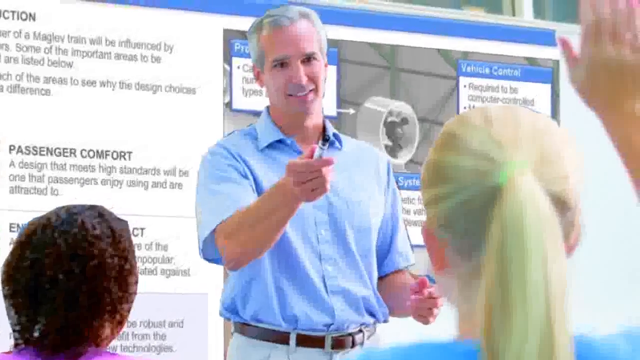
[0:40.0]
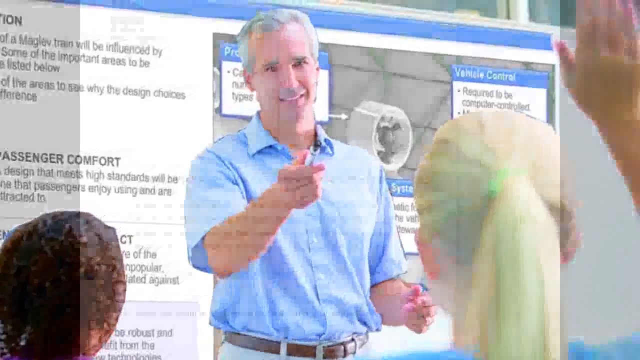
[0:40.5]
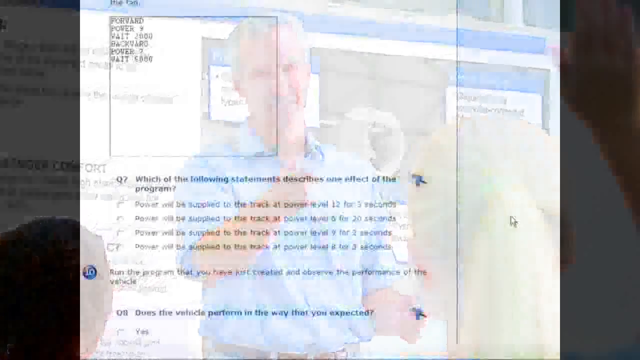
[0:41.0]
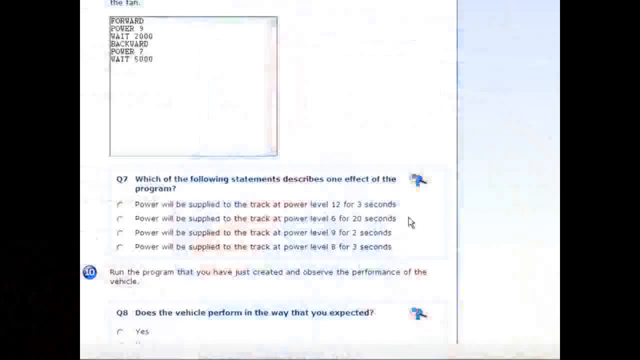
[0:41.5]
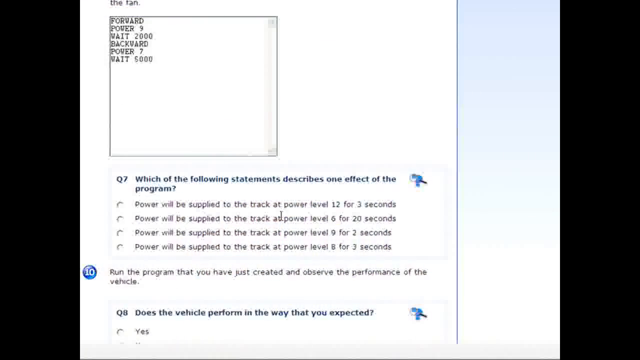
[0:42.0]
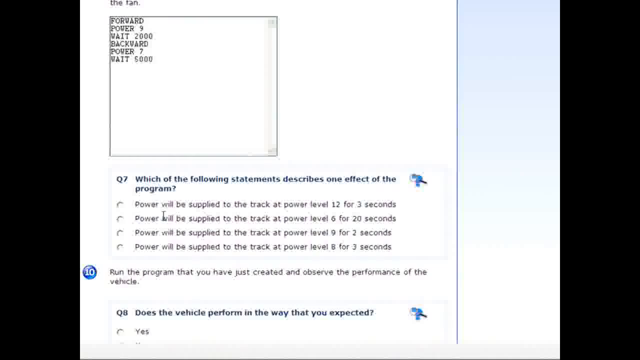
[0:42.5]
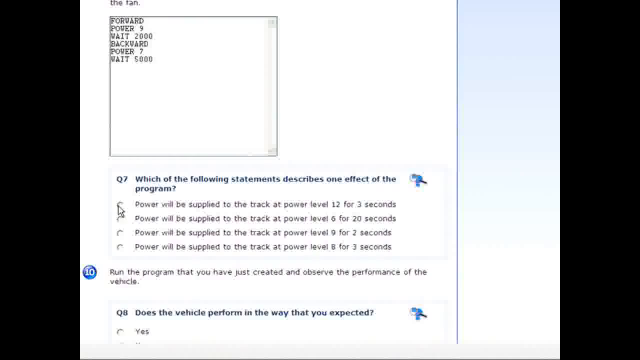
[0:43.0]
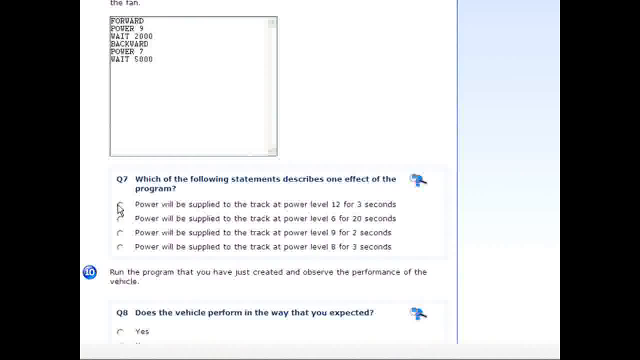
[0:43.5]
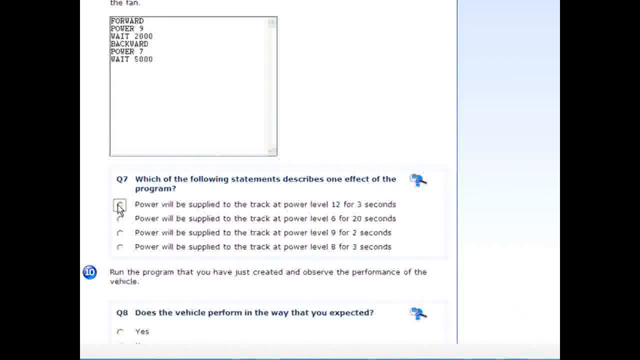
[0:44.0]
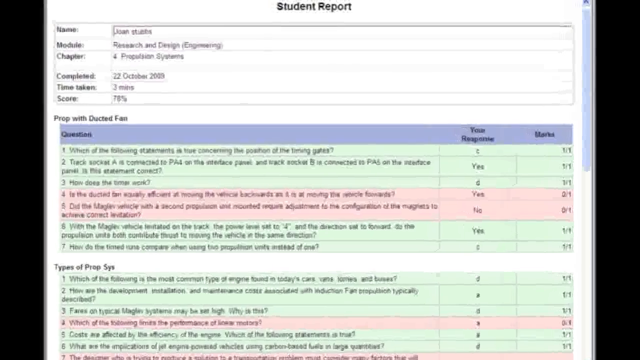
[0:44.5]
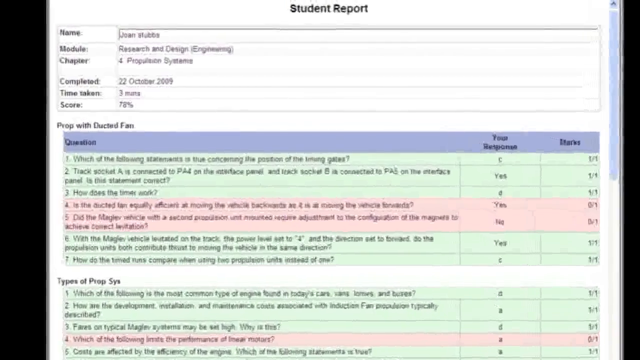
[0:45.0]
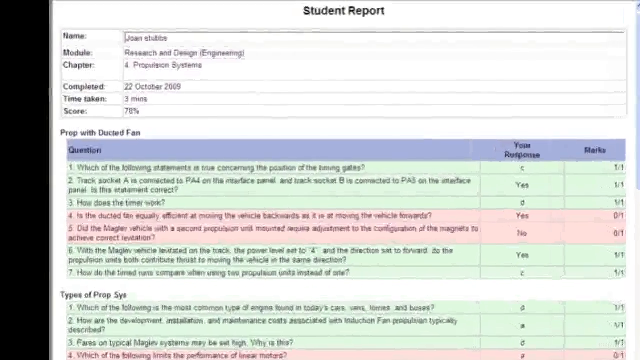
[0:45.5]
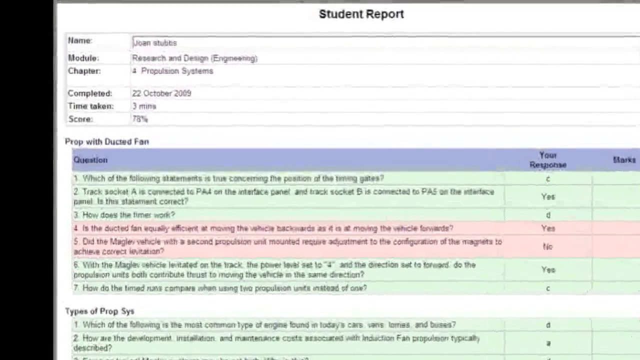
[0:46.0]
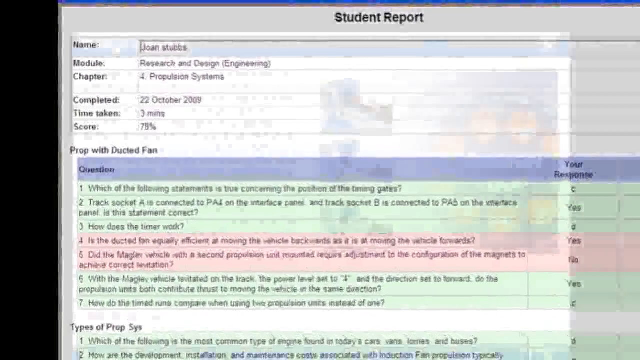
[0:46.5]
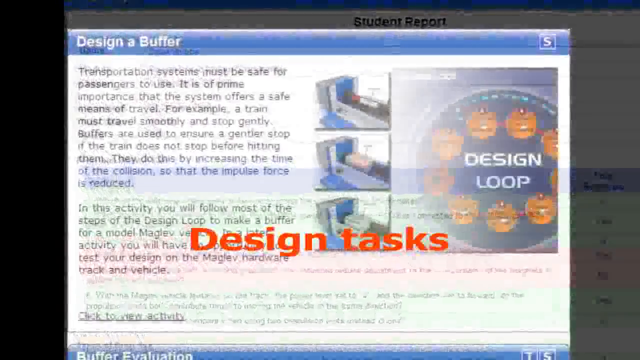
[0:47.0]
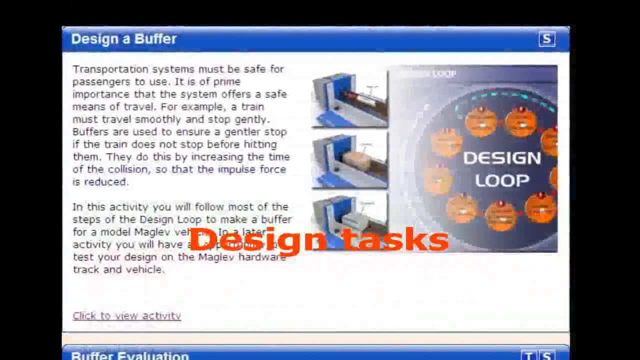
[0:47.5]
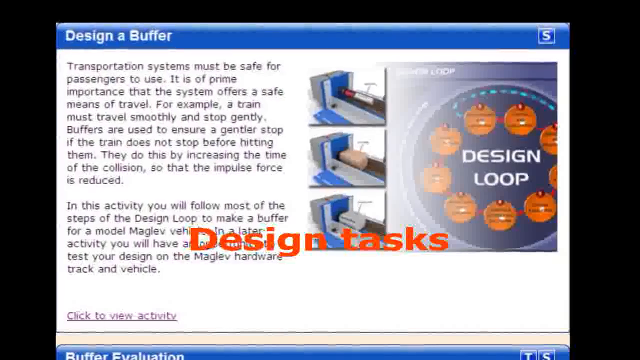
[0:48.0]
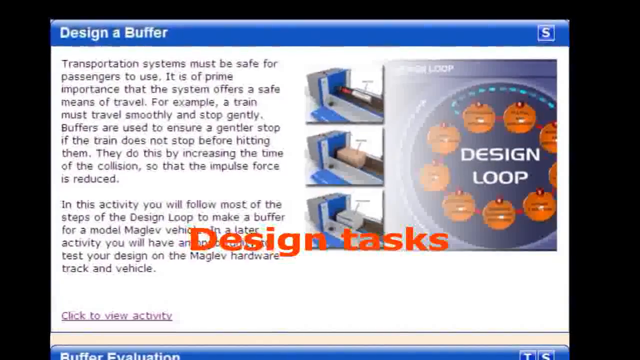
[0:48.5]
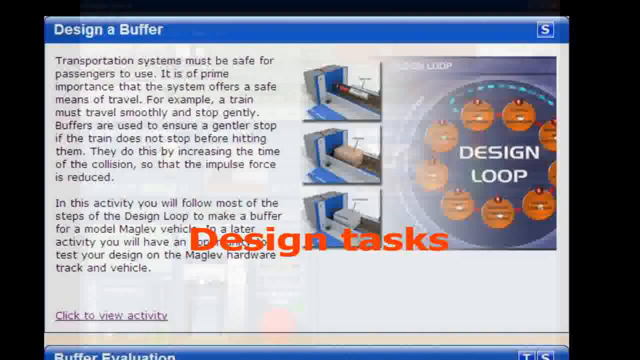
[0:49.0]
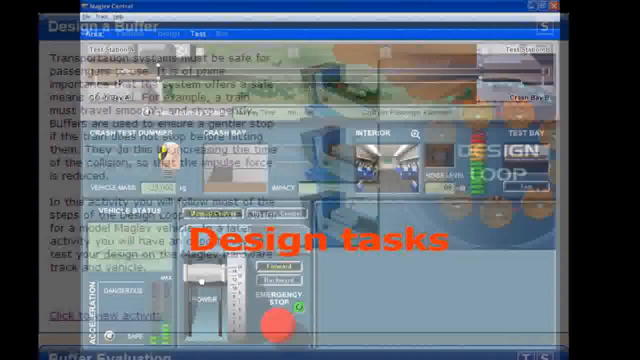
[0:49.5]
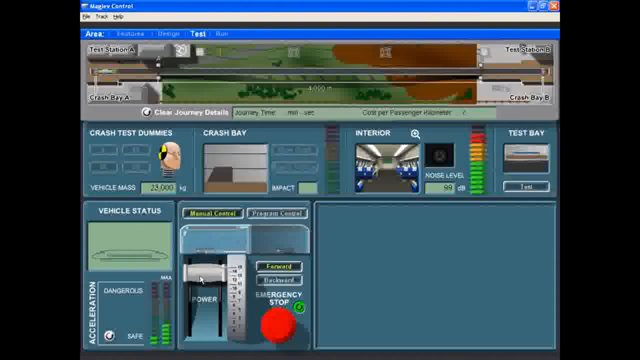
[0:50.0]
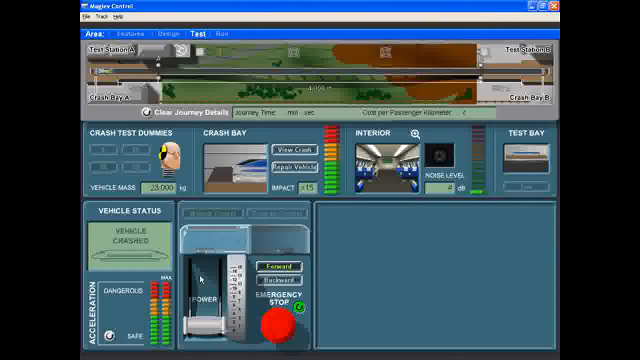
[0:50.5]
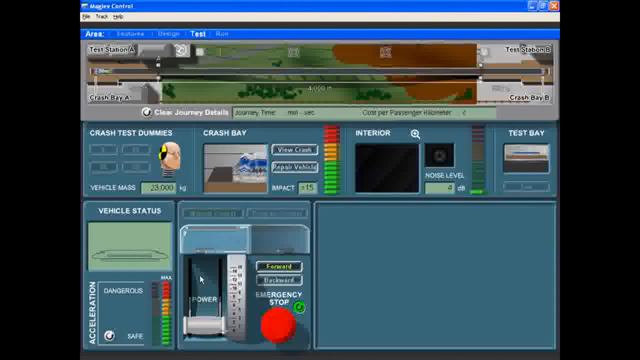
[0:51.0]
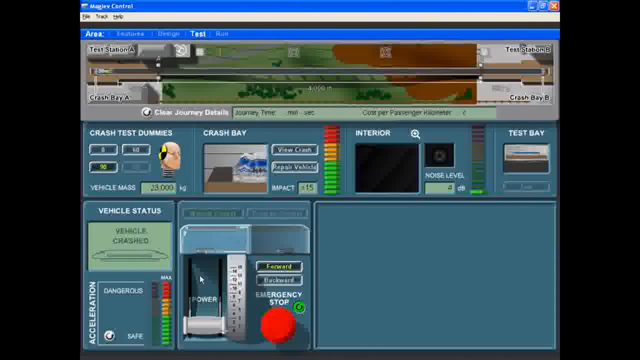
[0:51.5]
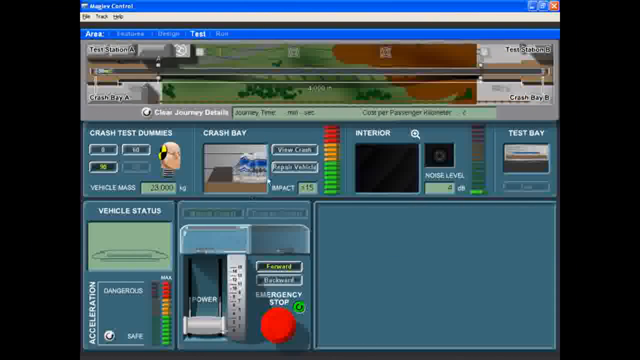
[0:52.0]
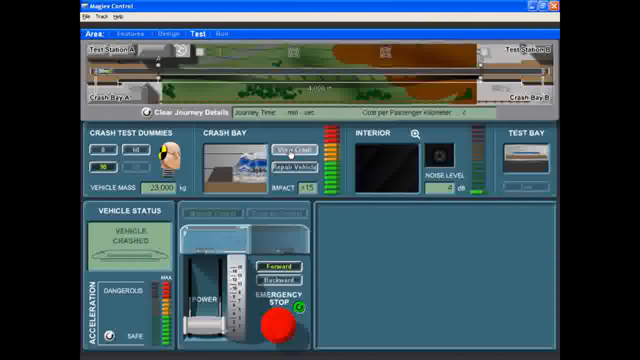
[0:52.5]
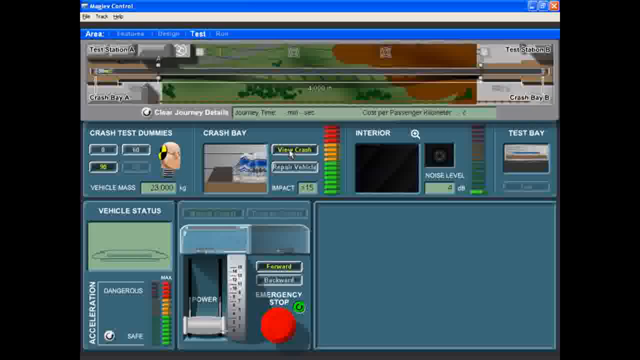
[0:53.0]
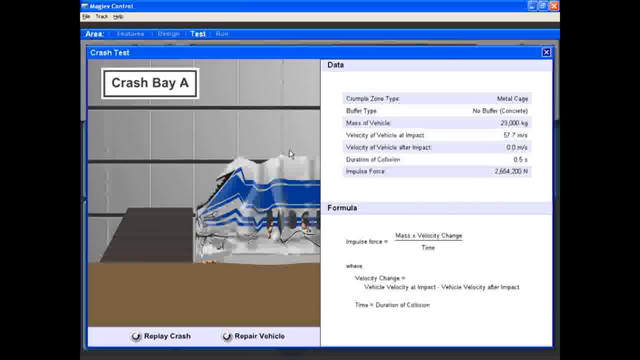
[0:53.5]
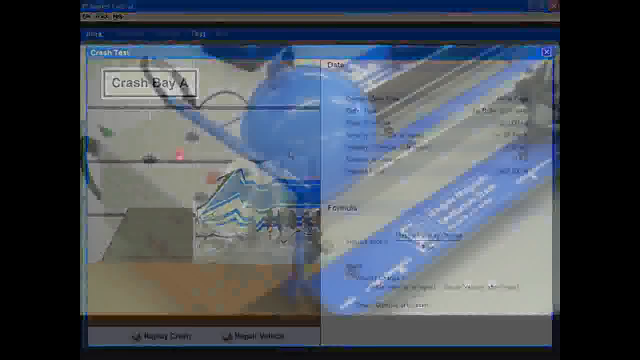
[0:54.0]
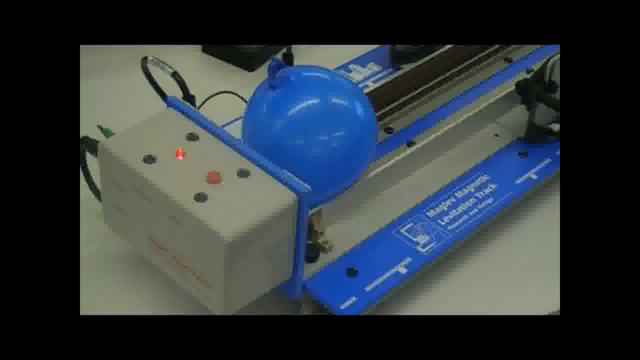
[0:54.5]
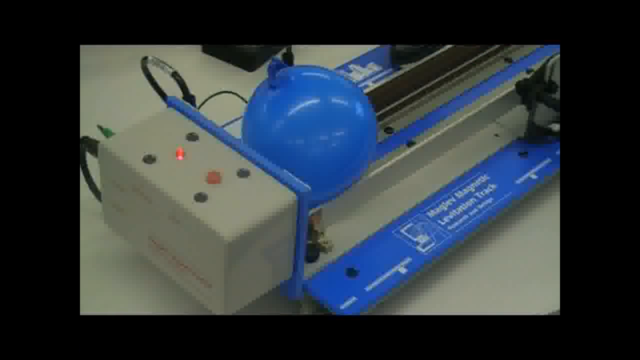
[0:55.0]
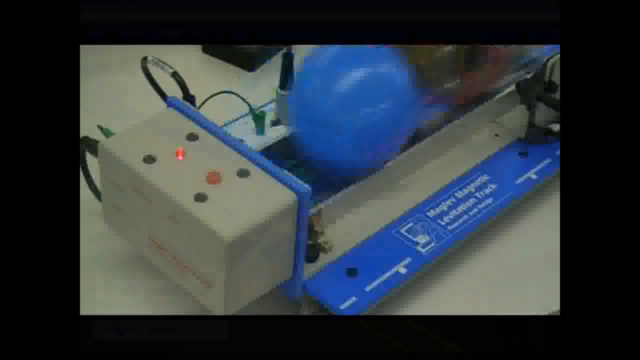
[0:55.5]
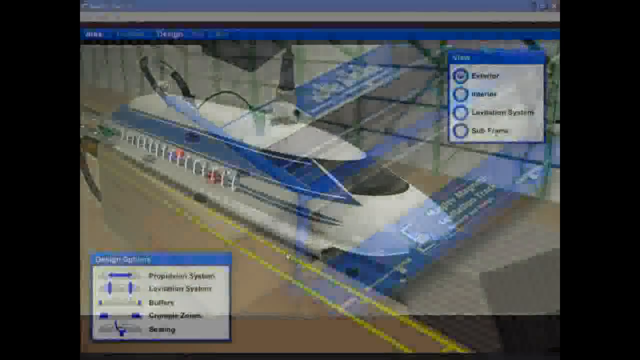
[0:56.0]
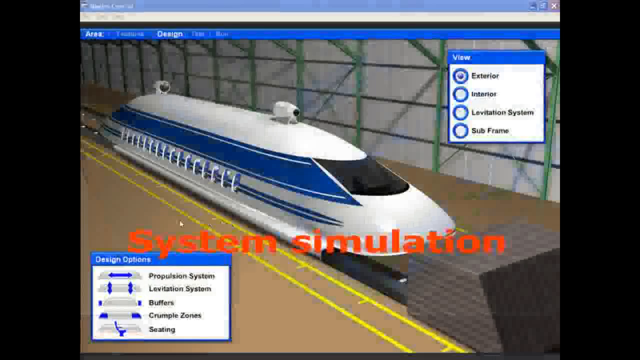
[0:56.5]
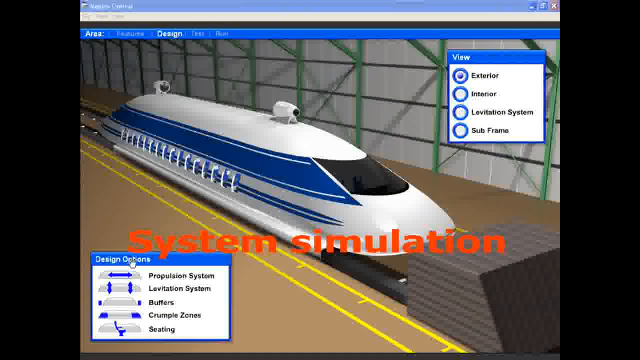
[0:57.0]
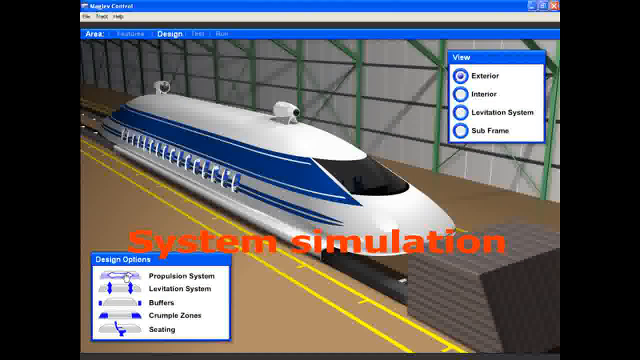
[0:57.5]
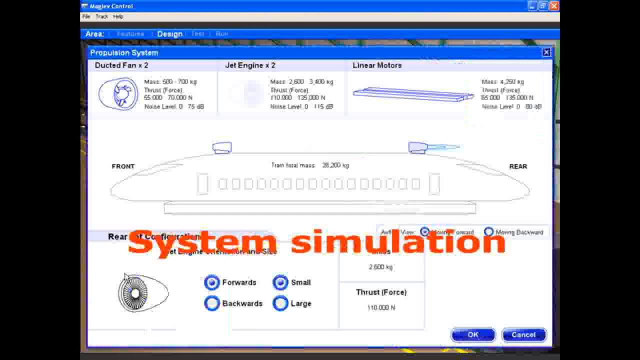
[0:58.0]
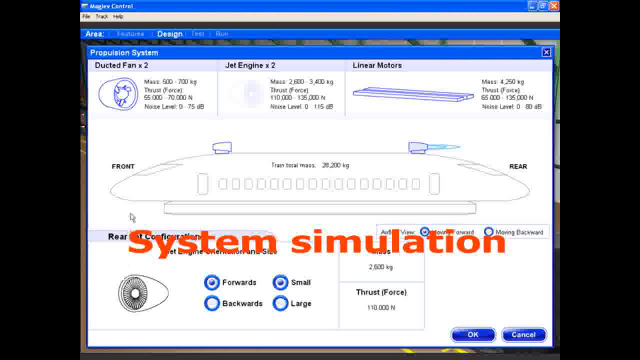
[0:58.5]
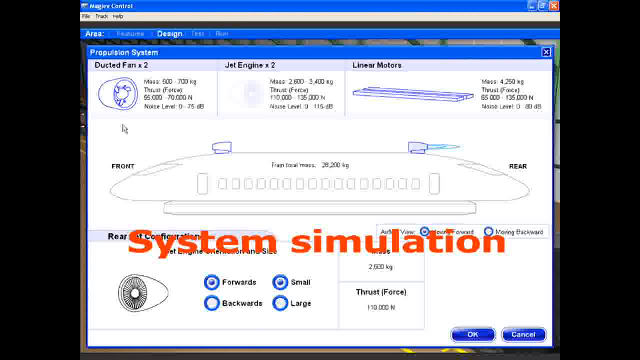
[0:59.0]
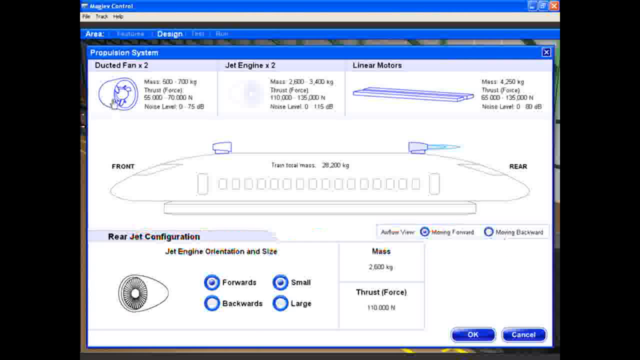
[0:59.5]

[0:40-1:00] The same image of the middle-aged man teaching appears, with him pointing towards a blonde student seen from behind, her hair in a ponytail and her right hand raised. Next comes a page that appears to have a quiz, with question seven visible, stating "which of the following statements describes one effect of the programme", four answer options, and another question below. The cursor selects the first answer. An image of a student report follows, giving the name as Joan Stubbs, the module as research and design engineering, and the chapter as propulsion systems, completed in October 2009. It then shows each of the questions with the student's answers, highlighted in green or red depending on whether they were correct. A web page then says "design a buffer", with orange bold writing stating "design tasks" over the top. It cuts to an image of an app called Maglev Central and then to something saying "system simulation". In the simulation image, someone appears to click on a part of the engine, selecting it and moving it across to the right-hand side of the image.